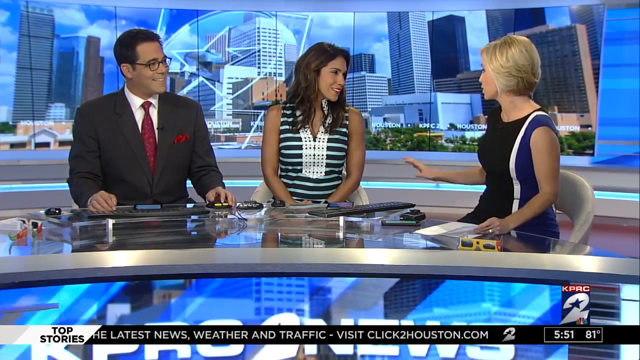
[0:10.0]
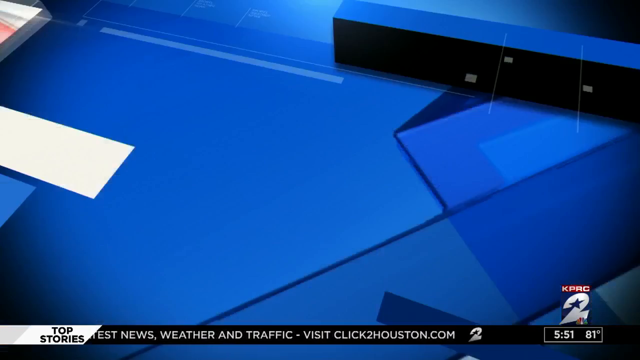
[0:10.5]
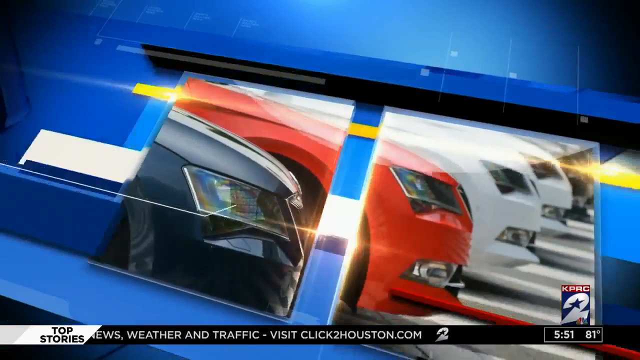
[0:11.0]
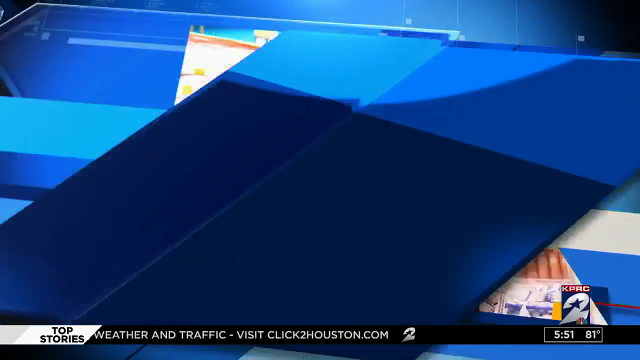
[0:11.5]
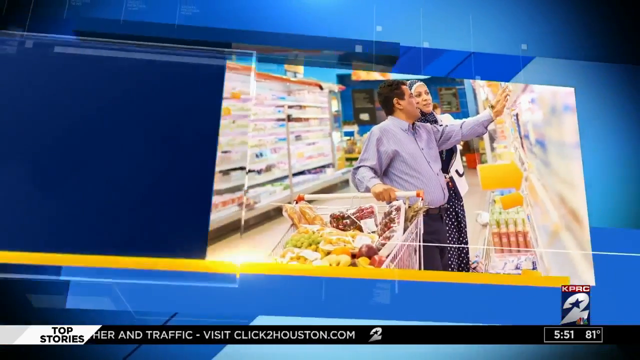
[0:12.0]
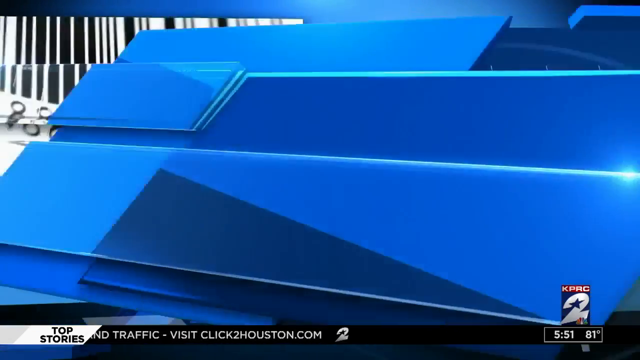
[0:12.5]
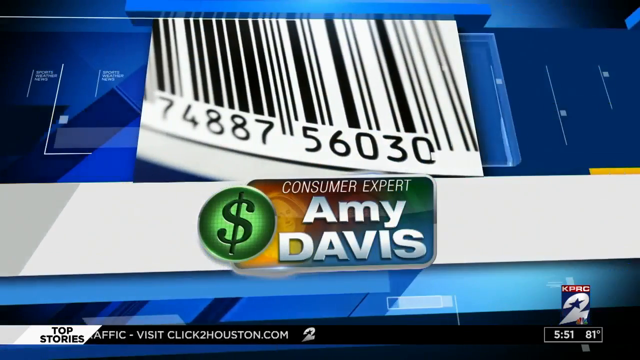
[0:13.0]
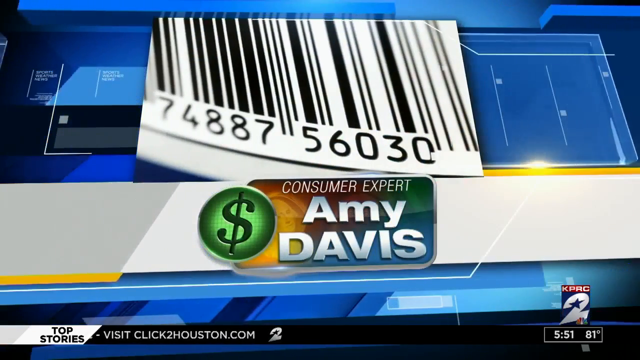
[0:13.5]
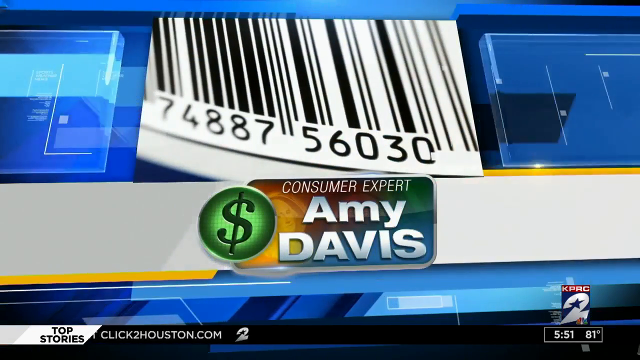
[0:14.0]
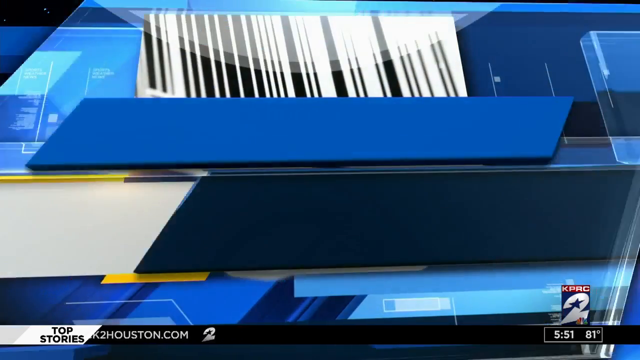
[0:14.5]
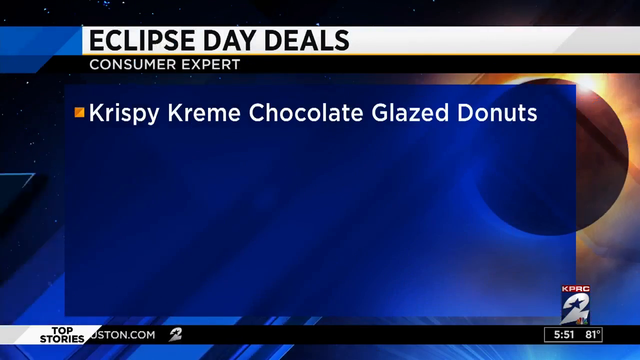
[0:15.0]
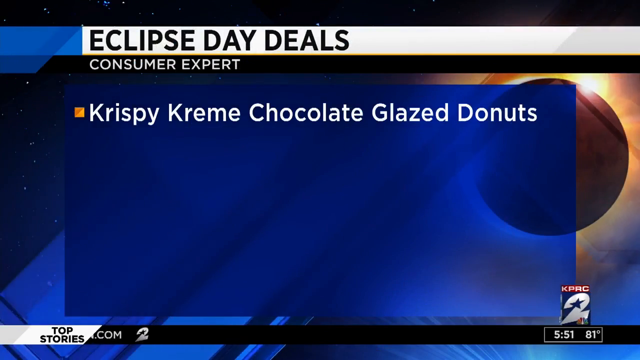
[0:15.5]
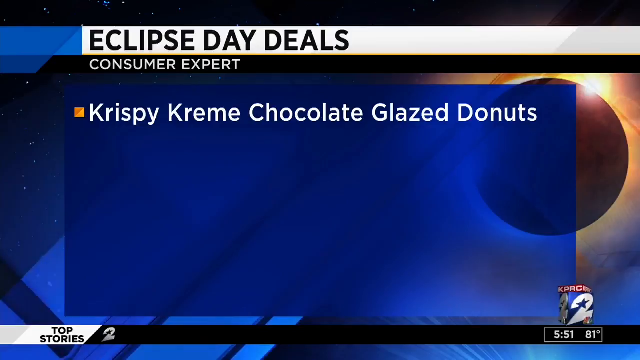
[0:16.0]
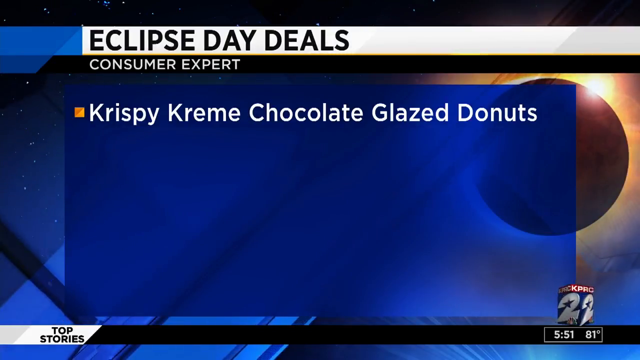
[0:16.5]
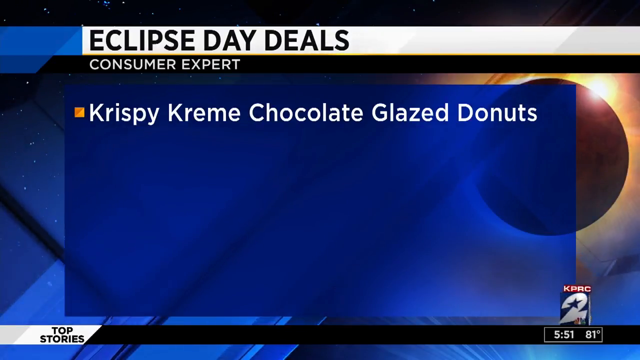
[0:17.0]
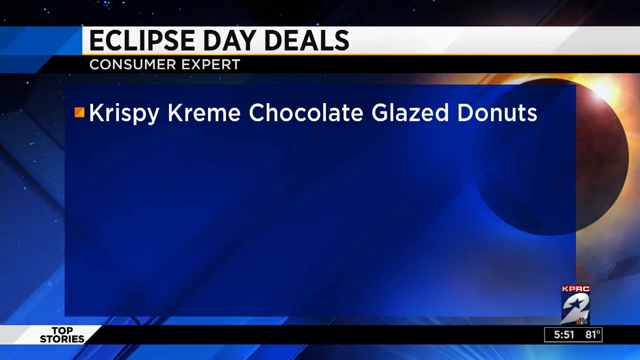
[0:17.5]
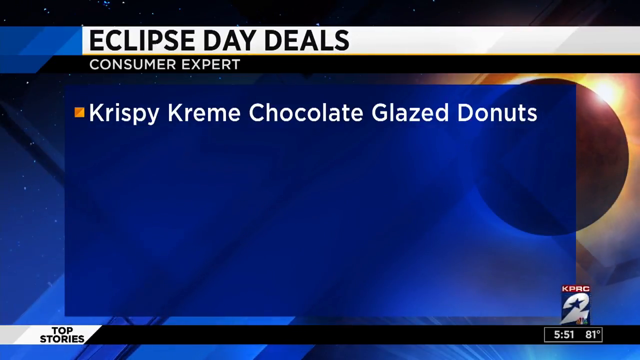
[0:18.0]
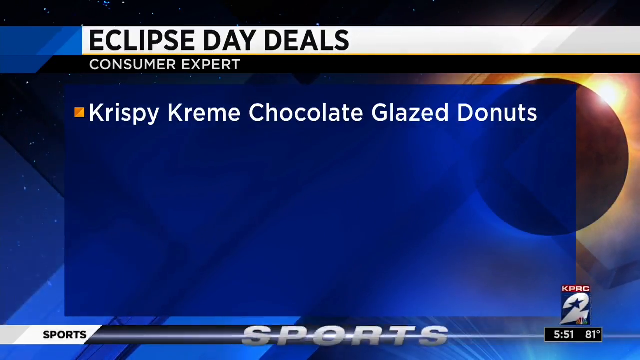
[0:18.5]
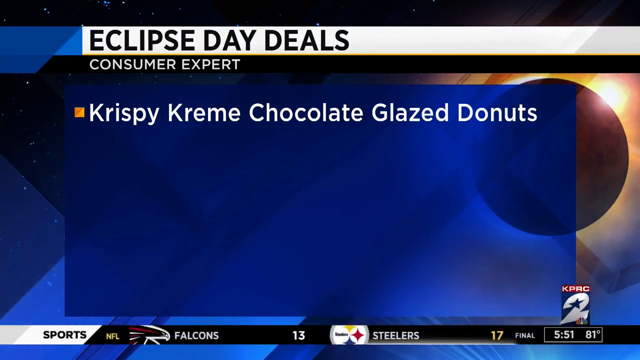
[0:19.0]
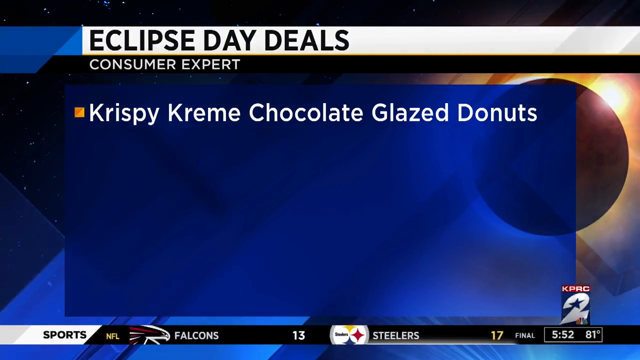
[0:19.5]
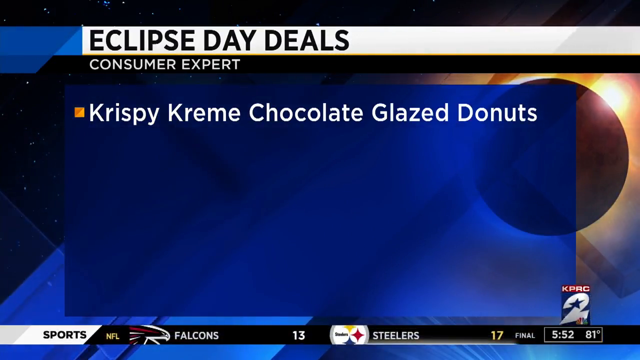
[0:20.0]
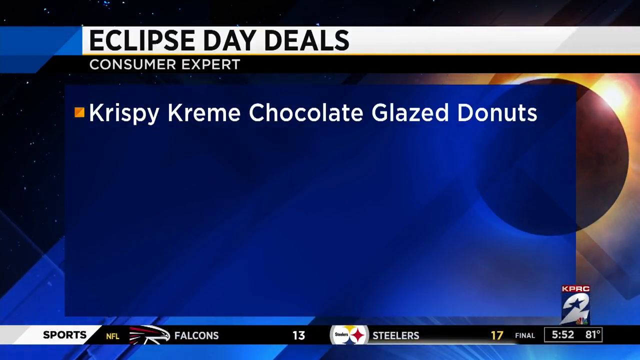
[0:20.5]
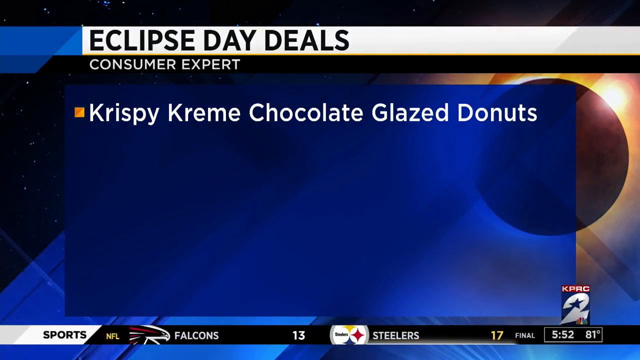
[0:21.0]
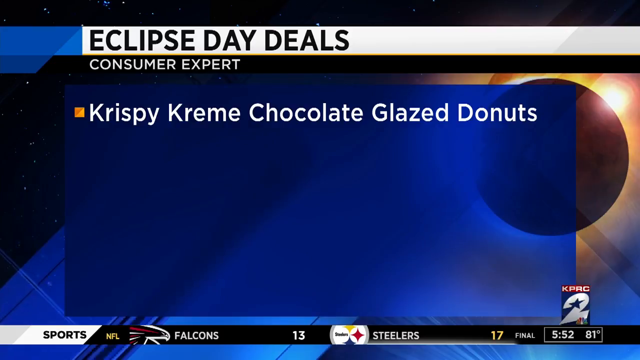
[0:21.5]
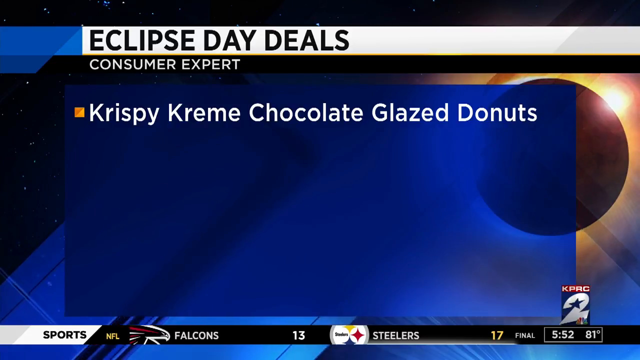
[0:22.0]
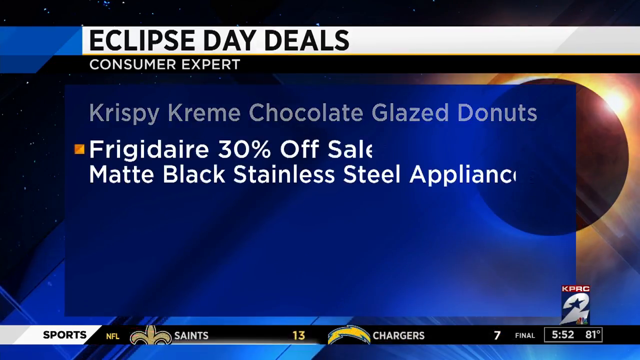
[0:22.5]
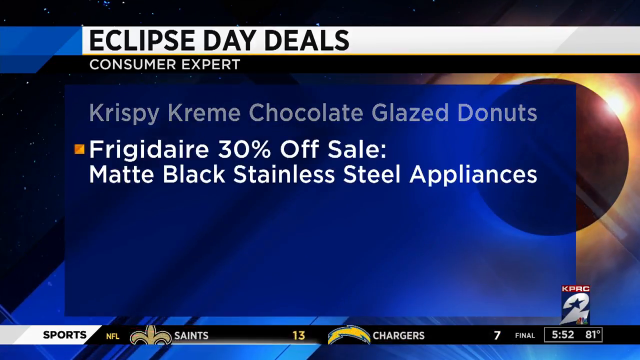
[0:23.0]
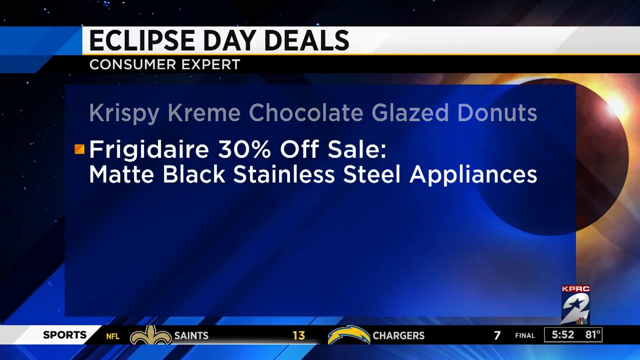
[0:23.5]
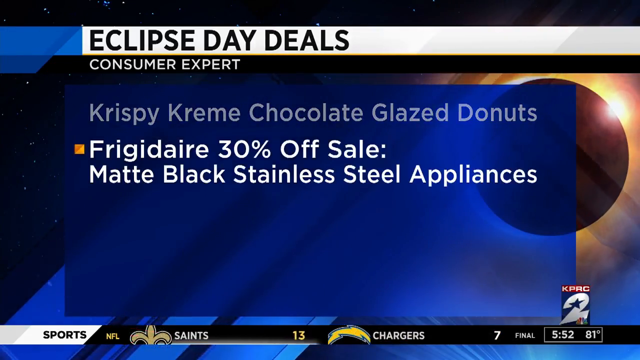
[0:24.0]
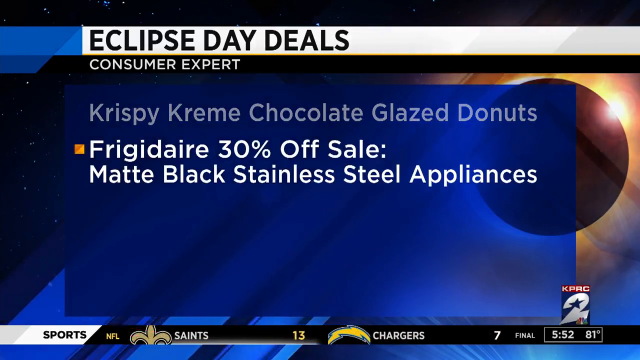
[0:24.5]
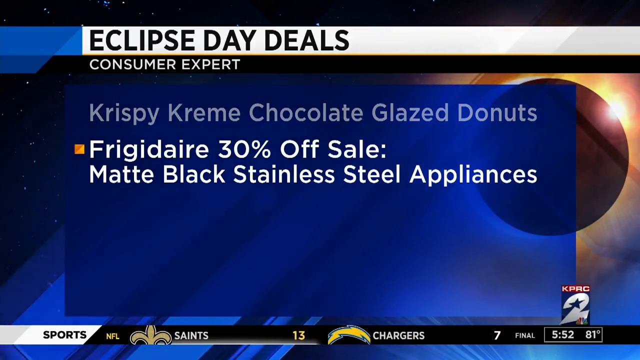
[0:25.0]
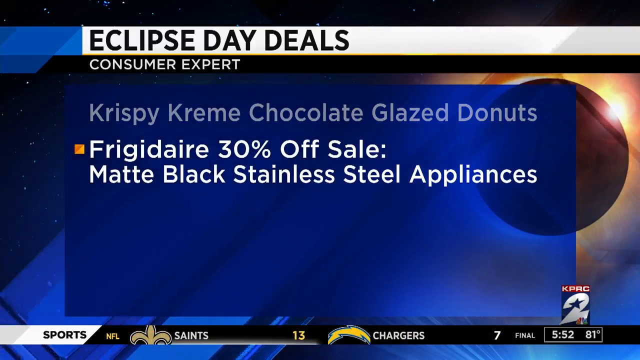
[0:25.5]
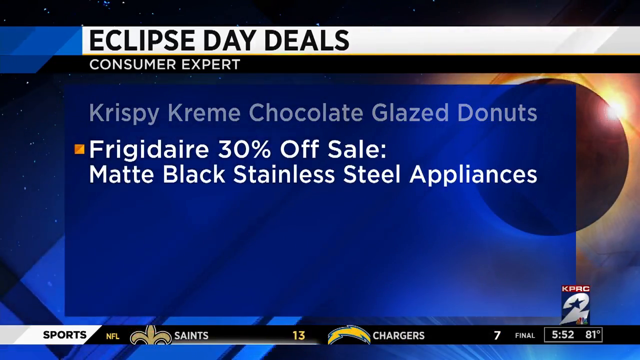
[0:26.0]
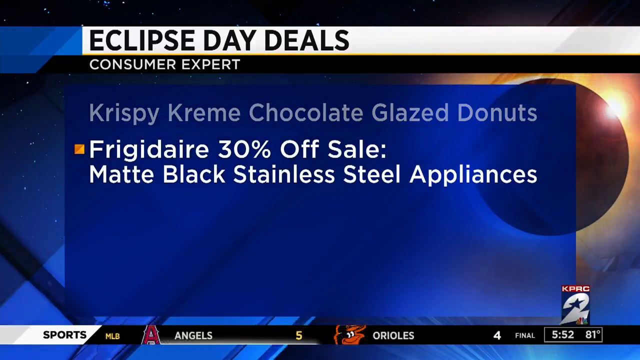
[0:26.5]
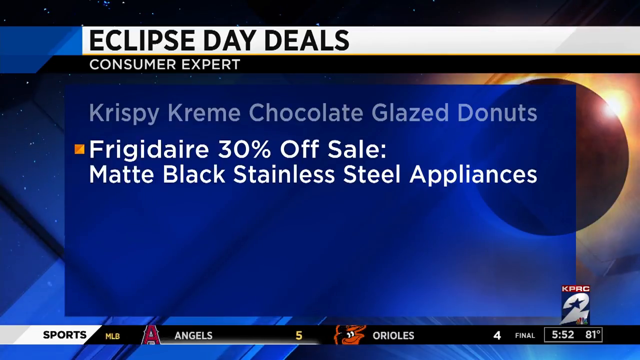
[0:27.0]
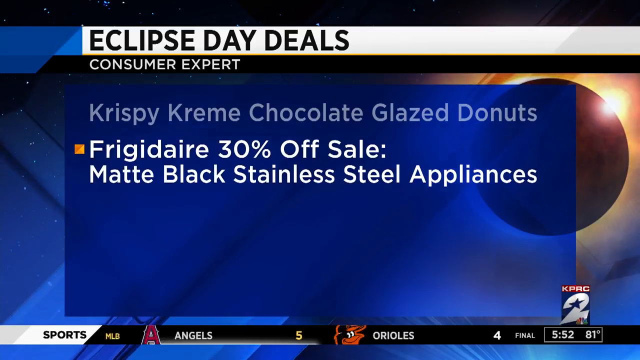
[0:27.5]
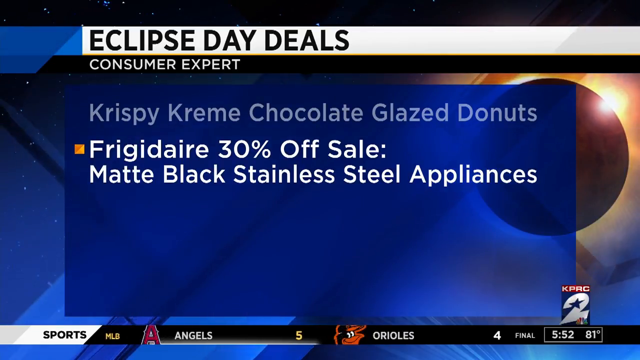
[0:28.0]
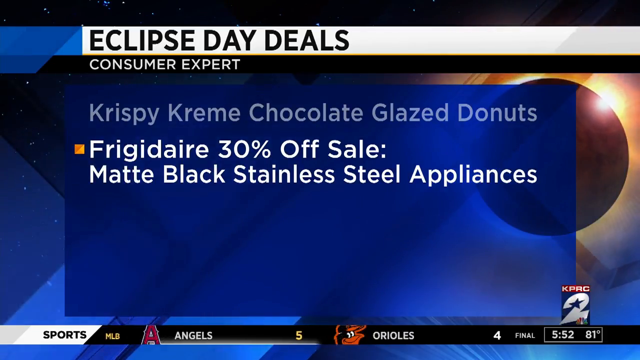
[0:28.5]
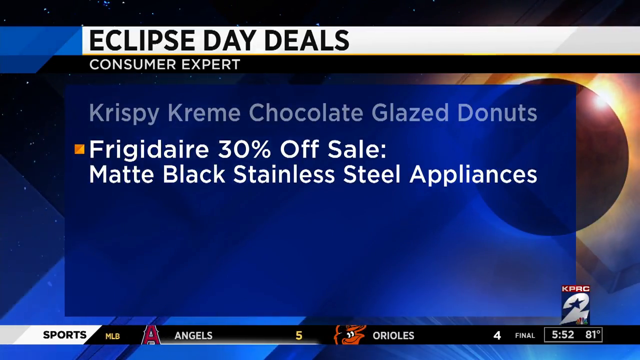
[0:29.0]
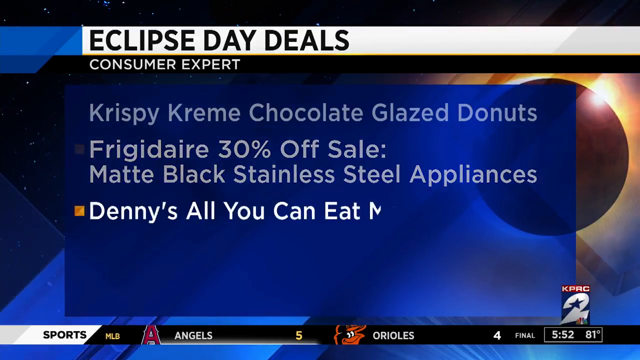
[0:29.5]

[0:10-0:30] The camera focuses on the lady with blonde hair, who wears a black, blue and white dress and sits in front of white papers on a table. The shot then moves quickly to consumer expert Amy Davis. There is a dollar sign and a barcode with the number 7488756030. On a blue screen is the headline "Eclipse Day Deals" with "Consumer Expert". Listed are Krispy Kreme chocolate glazed donut, below it a Frigidaire 30% off sale on matte black stainless steel appliances, and Denny's all-you-can-eat moon cakes for $4. Along the bottom of the screen are sports results for NFL and MLB games, including the Saints and the Angels; the scores shown include Falcons 13 and Angels 5.